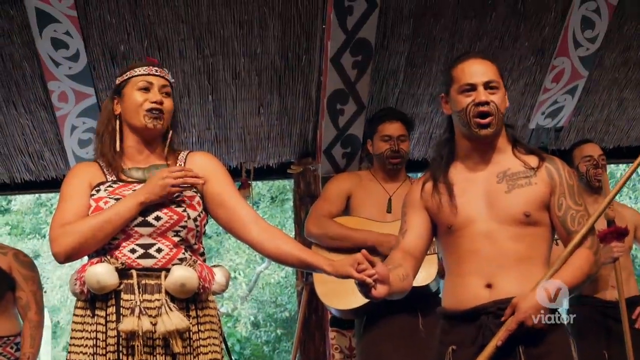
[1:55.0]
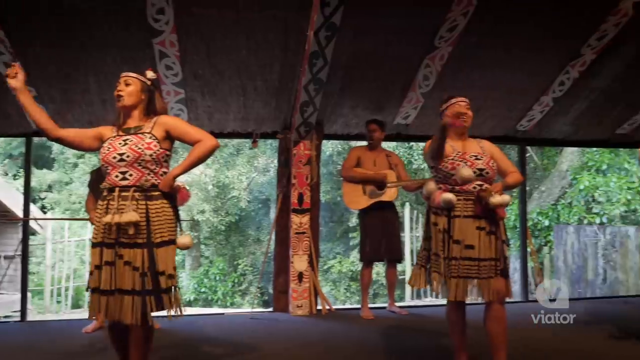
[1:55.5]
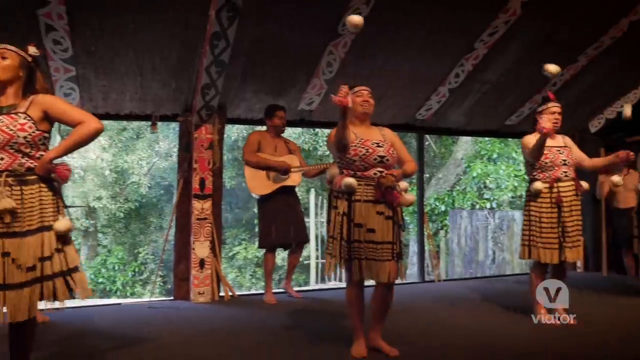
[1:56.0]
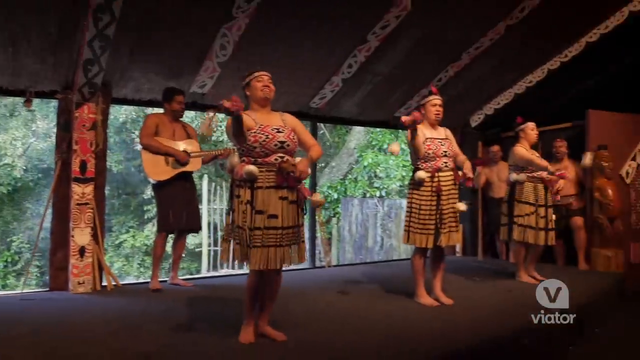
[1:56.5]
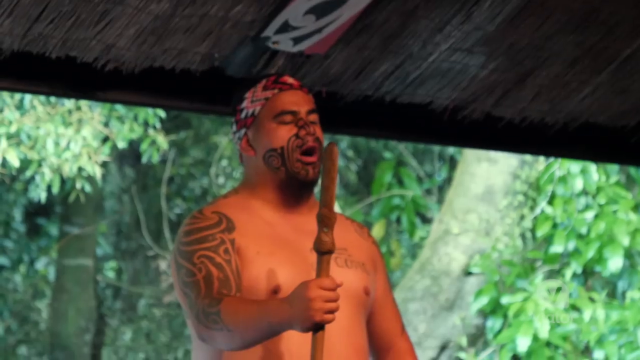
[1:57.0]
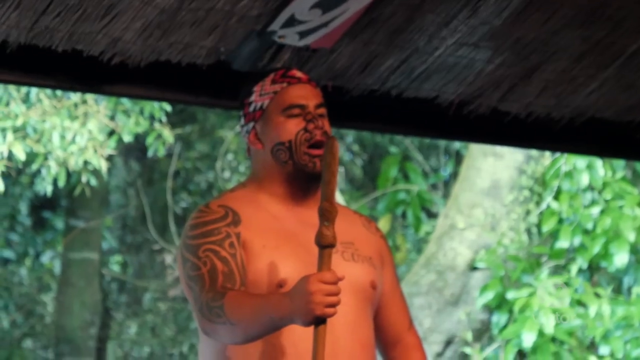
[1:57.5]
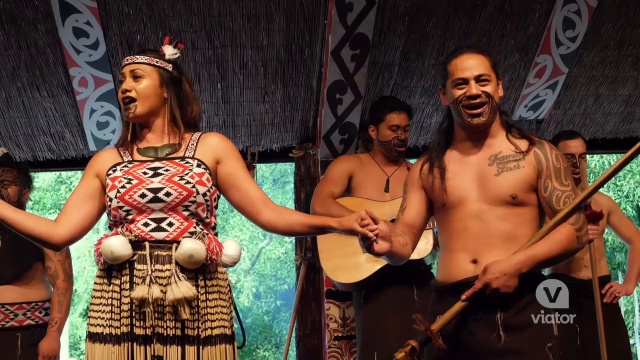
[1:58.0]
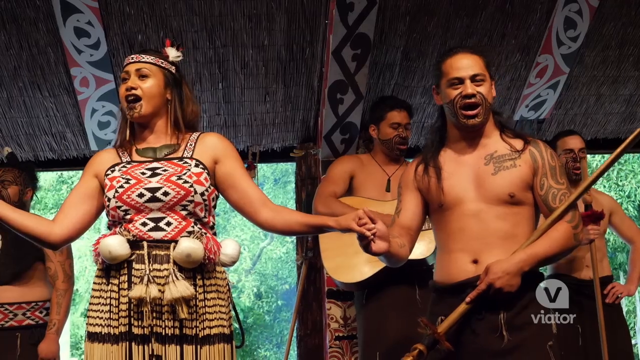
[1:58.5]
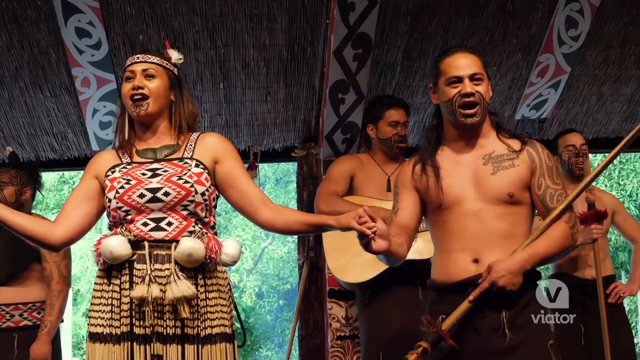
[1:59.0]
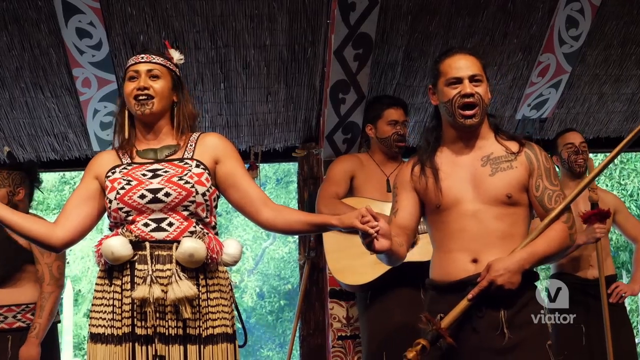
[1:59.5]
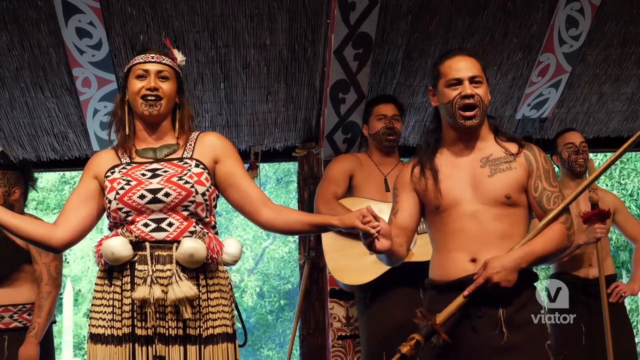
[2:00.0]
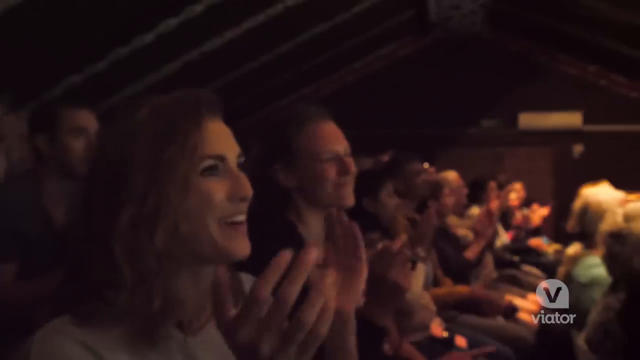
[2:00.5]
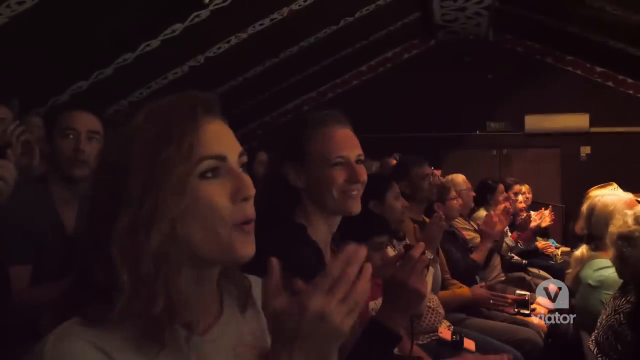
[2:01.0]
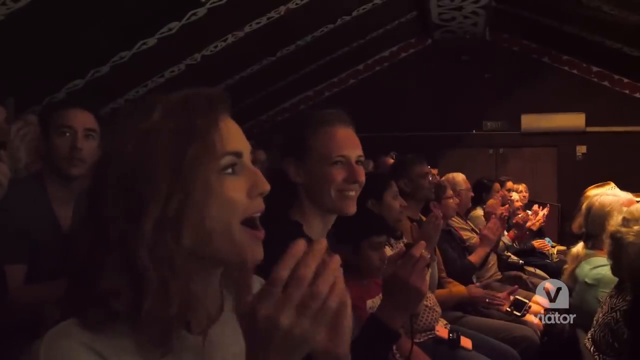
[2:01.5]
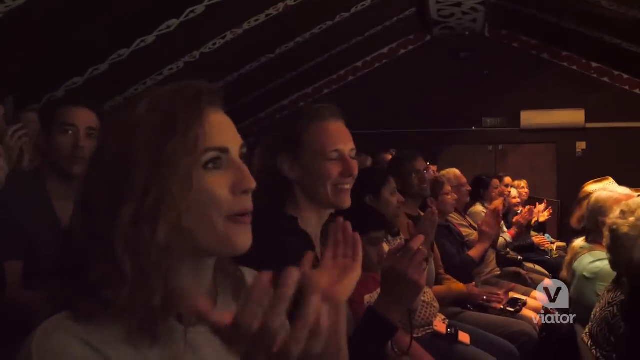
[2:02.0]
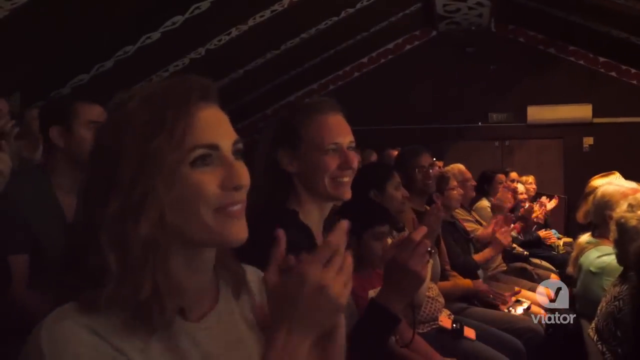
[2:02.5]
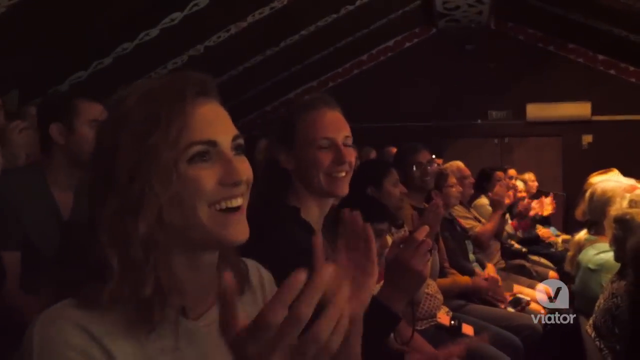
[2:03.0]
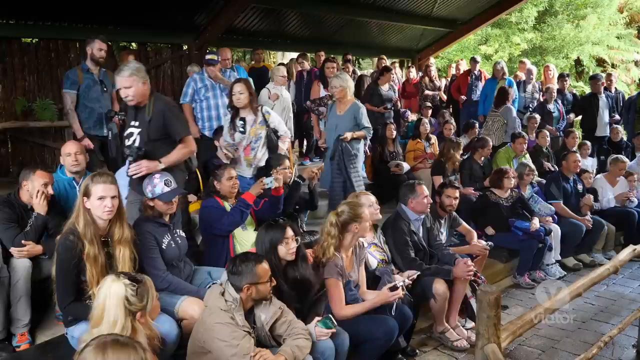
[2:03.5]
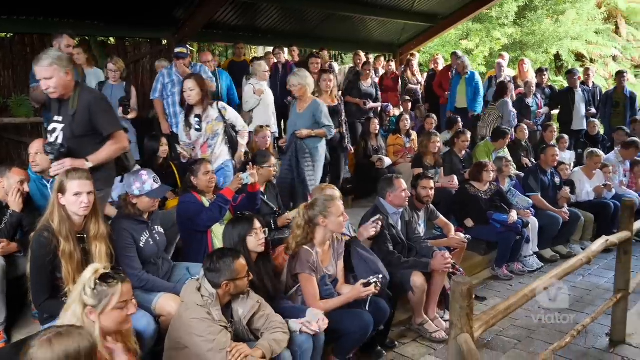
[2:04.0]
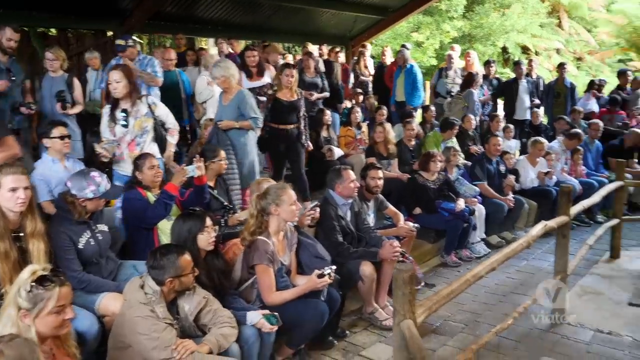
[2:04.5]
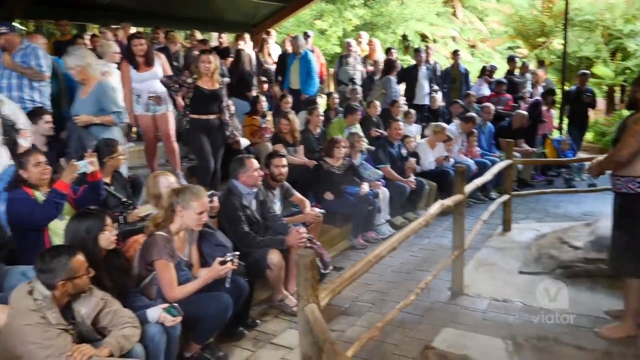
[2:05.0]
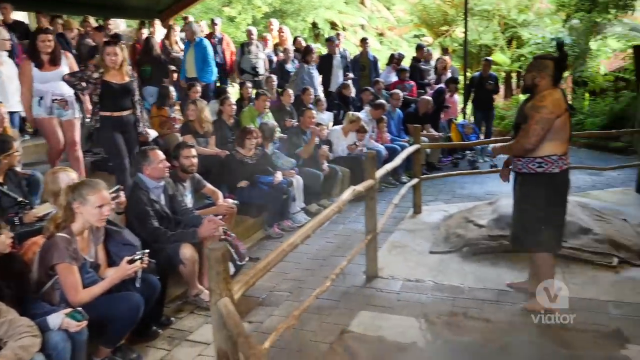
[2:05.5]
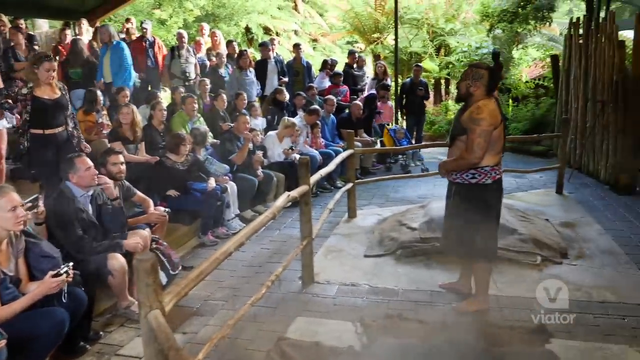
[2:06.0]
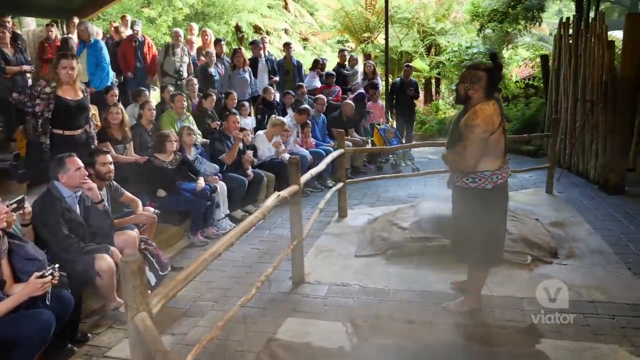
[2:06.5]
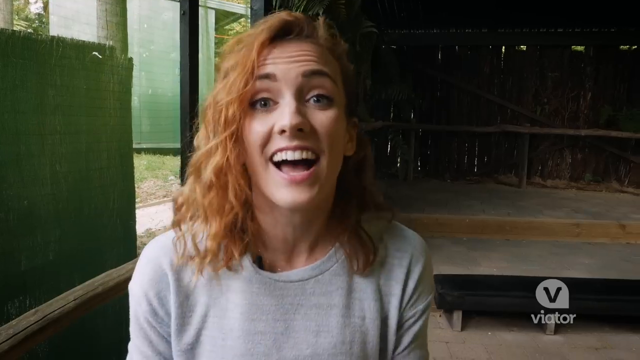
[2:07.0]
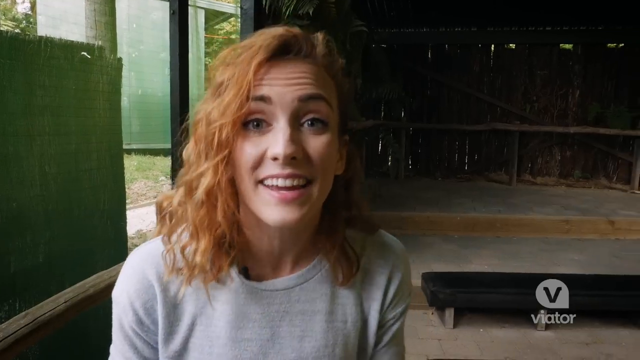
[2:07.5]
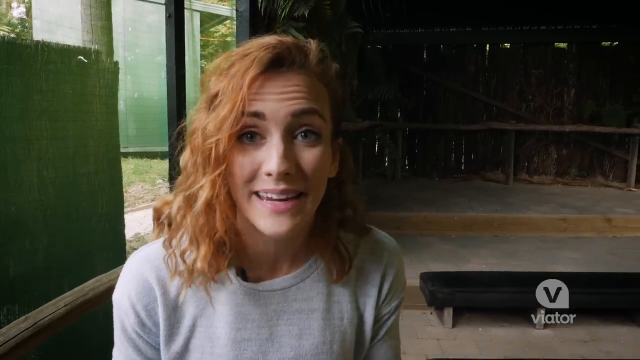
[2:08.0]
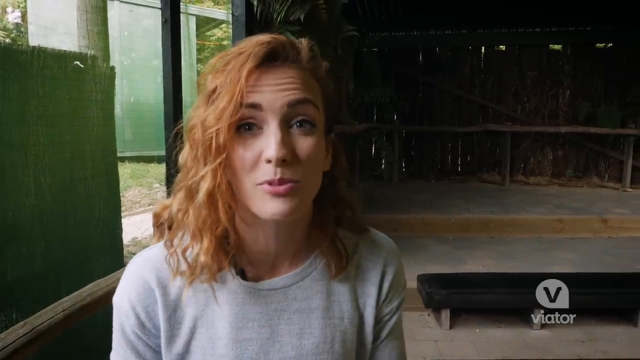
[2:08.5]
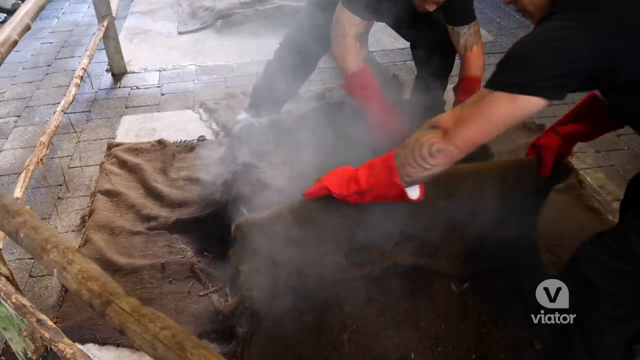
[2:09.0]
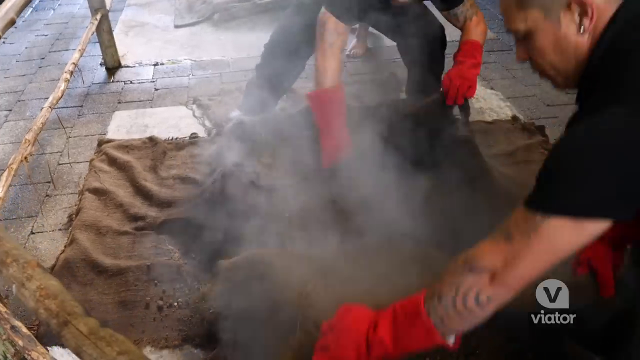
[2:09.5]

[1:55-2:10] On the stage where the Native people perform, a line of women wave the balls on strings around, and the man and woman hold hands while the woman looks like she is singing. The audience claps along, and the host claps and smiles. In an outdoor scene, an audience of people stands kind of staggered, with a Native man in his black skirt standing to the right in front of them, apparently talking. The host talks to the camera again. Then, on the ground, what looks to be a black piece of material with heat coming from it is moved by two people; it is unclear what it is, but possibly they are cooking dinner in it.